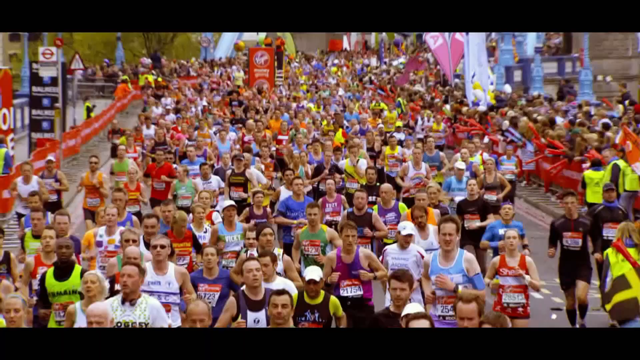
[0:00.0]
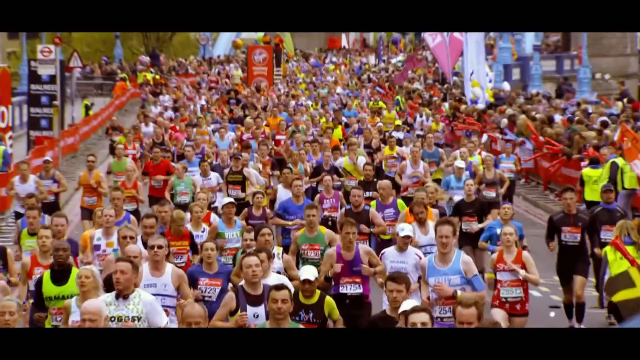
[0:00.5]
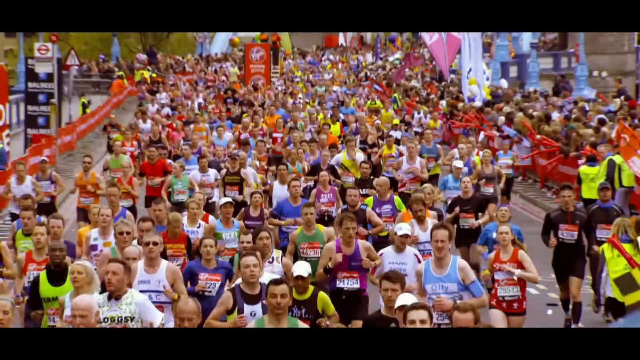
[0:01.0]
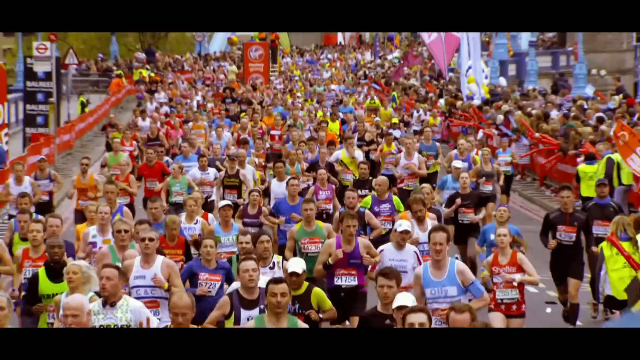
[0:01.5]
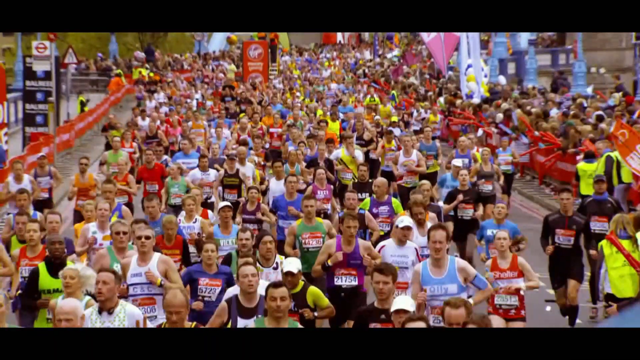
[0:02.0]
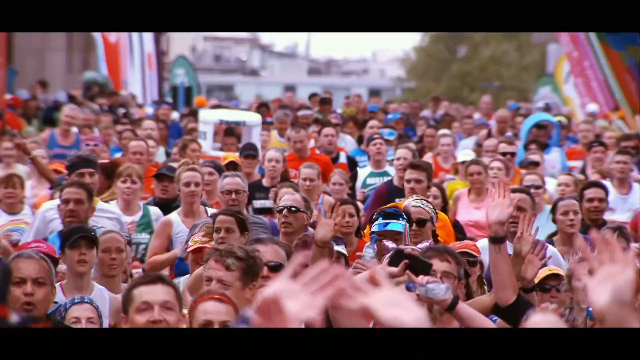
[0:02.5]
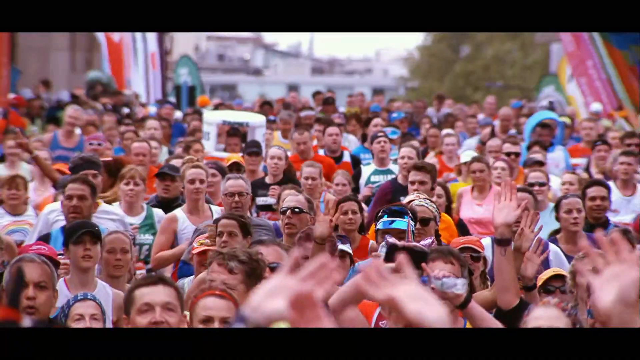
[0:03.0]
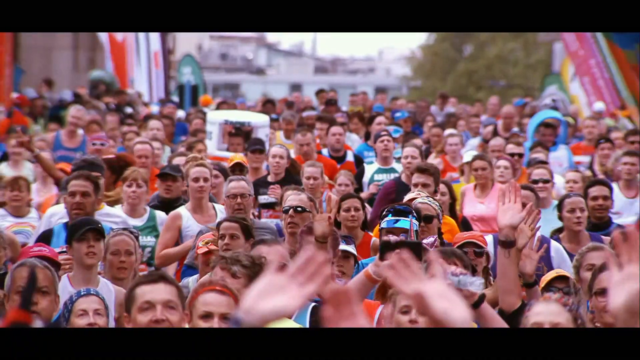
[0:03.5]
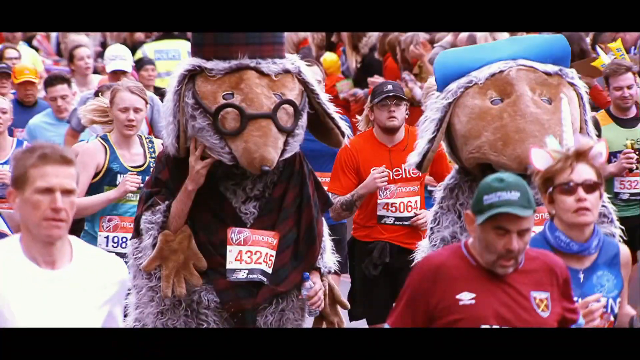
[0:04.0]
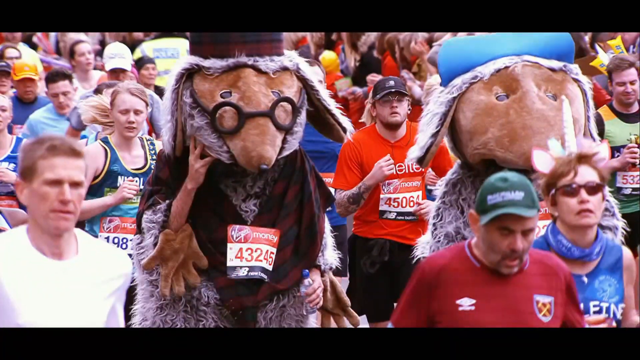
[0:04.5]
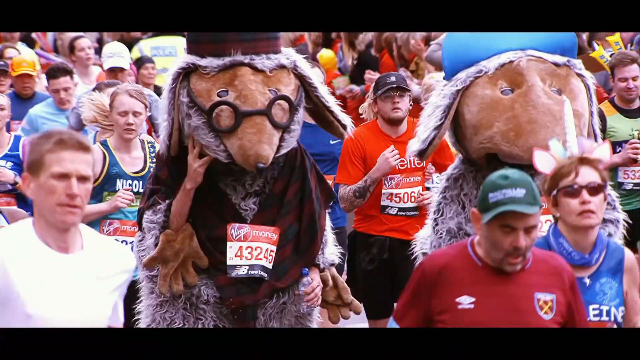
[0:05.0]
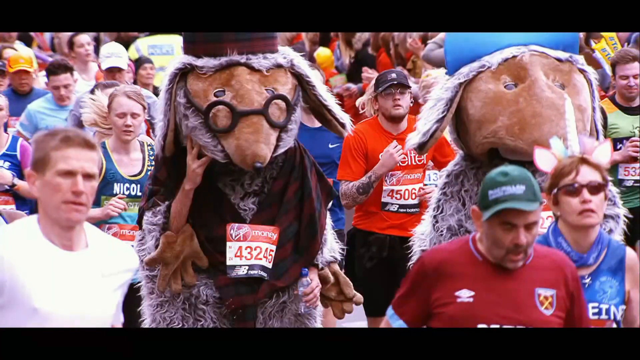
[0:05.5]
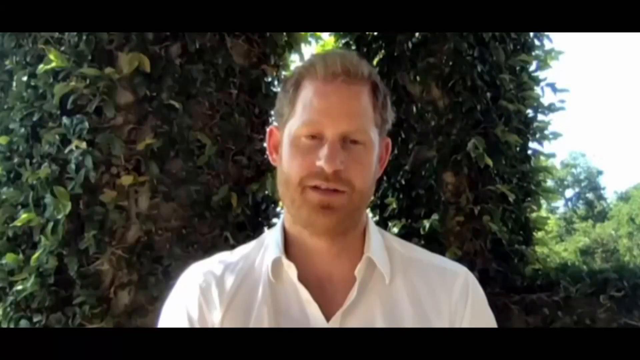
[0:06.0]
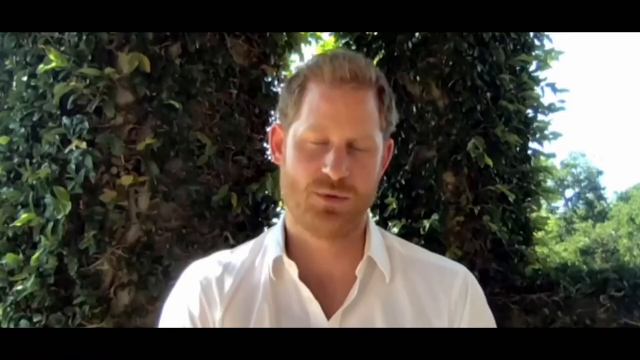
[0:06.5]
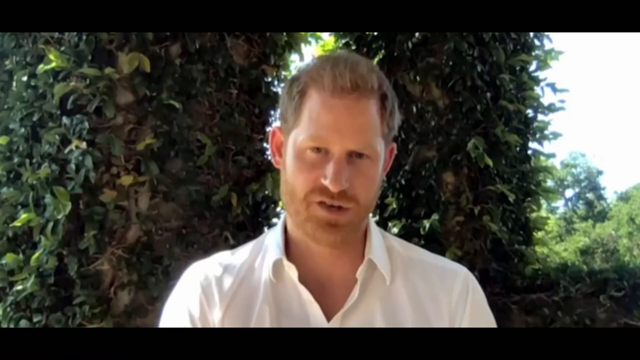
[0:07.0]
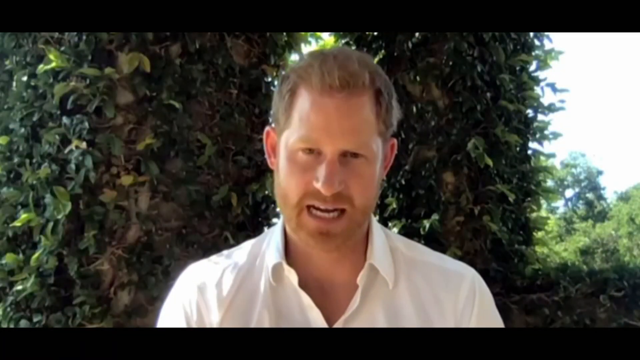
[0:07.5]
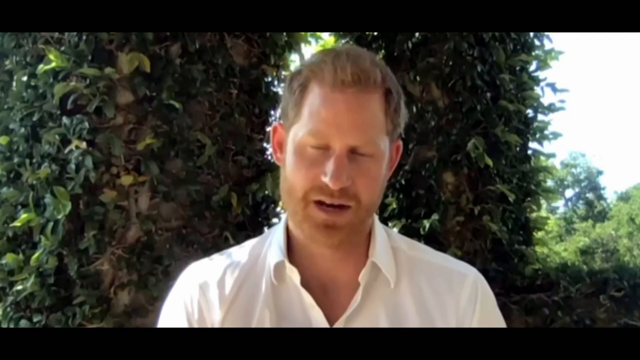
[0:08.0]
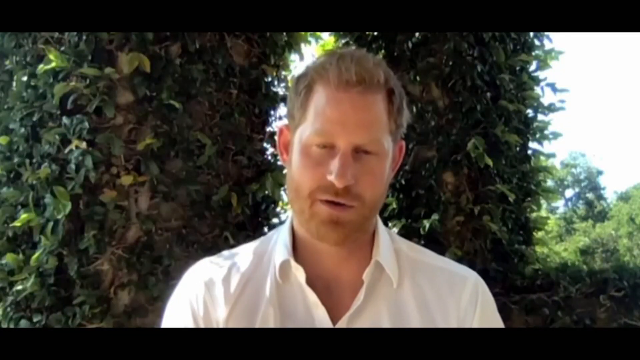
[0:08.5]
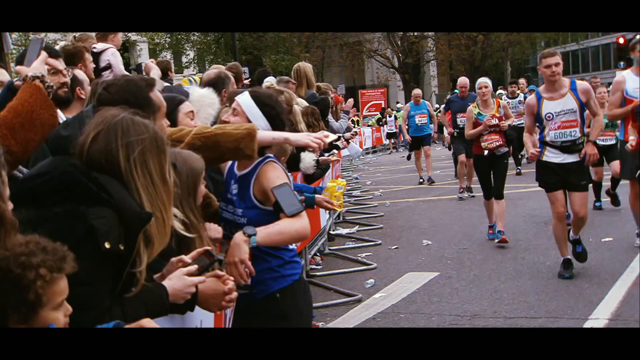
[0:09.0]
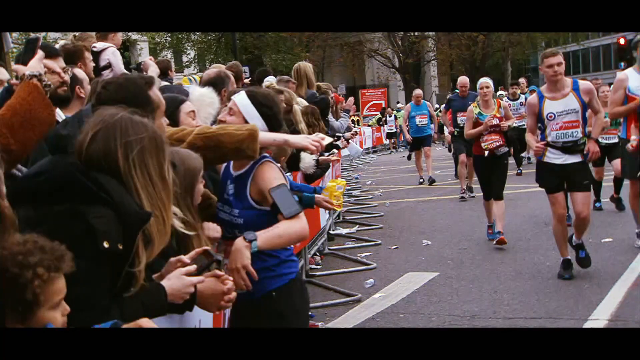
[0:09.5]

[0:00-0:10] Many different marathon runners appear on screen, thousands of people in various colored outfits, all with numbers affixed to them. They begin running in slow motion. The camera angle changes to show their faces as they continue moving in slow motion. After another change of camera, two runners are seen dressed in fursuits; they appear to be animals of some sort with shaggy fur, possibly dogs. They keep moving in slow motion. The scene then transitions to a white man with large ears, a red beard and medium-length brown hair, wearing a white collared shirt and sitting in front of some trees with lots of leaves. He begins to speak, and his movement is rapid compared with the slow-motion footage before. The video cuts back to the race, where runners are on the right-hand side and one of the runners is embracing someone on the far left-hand side.